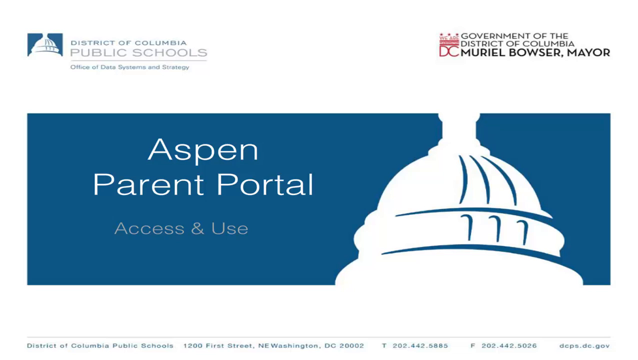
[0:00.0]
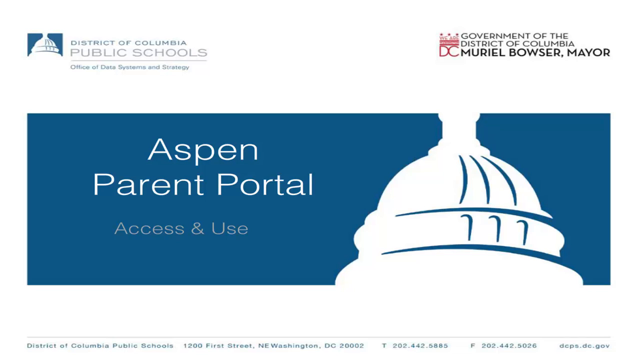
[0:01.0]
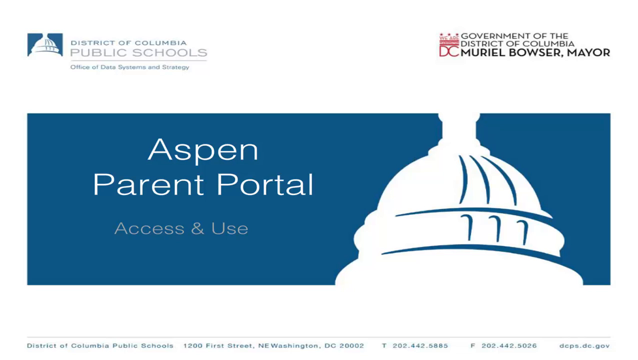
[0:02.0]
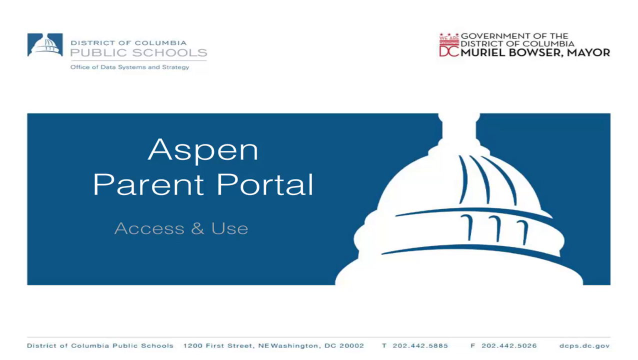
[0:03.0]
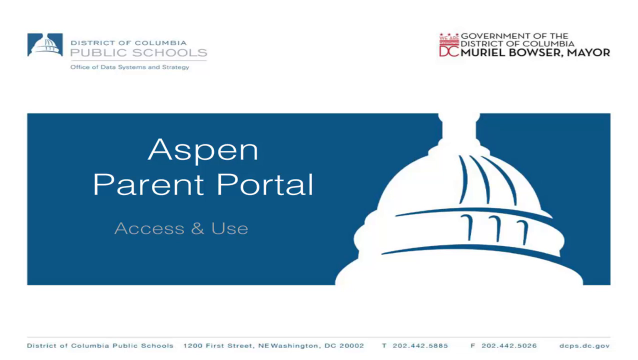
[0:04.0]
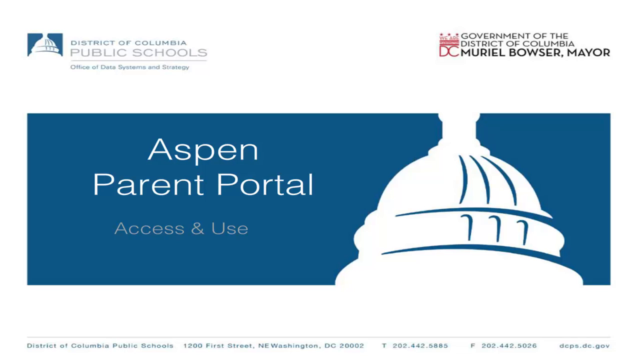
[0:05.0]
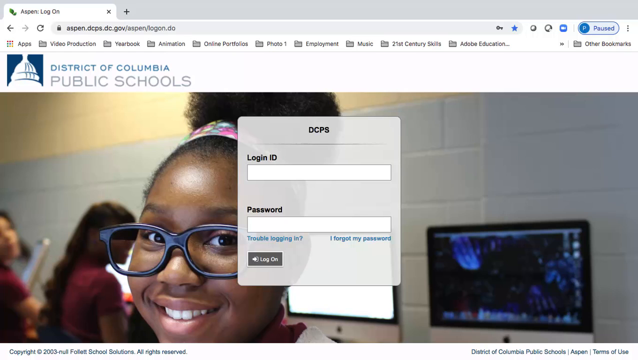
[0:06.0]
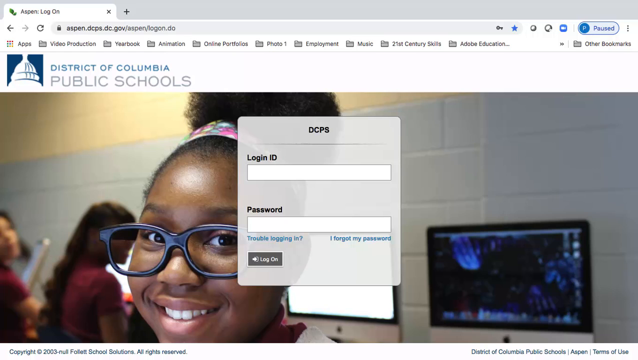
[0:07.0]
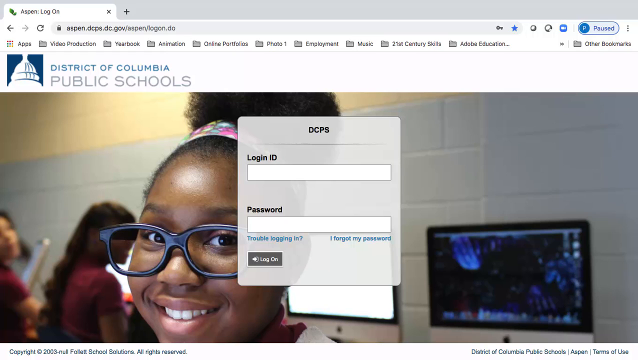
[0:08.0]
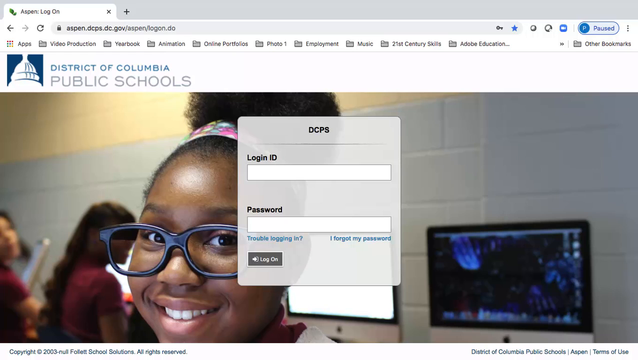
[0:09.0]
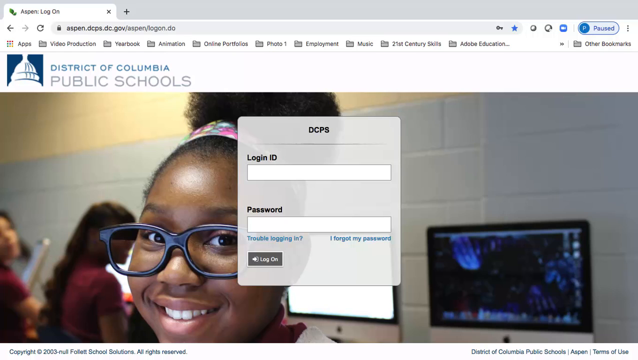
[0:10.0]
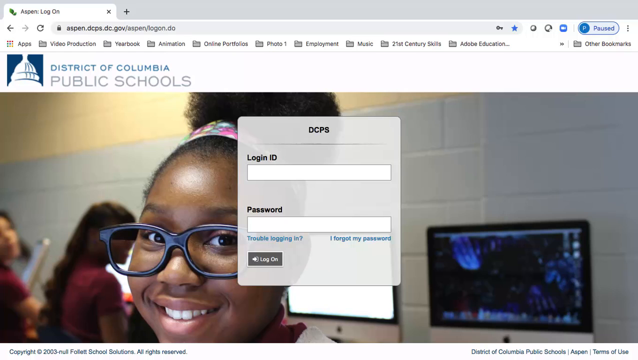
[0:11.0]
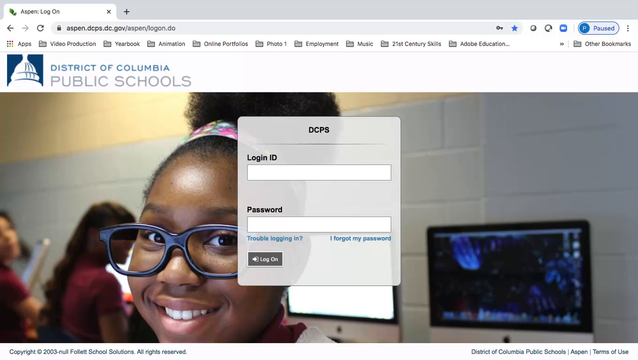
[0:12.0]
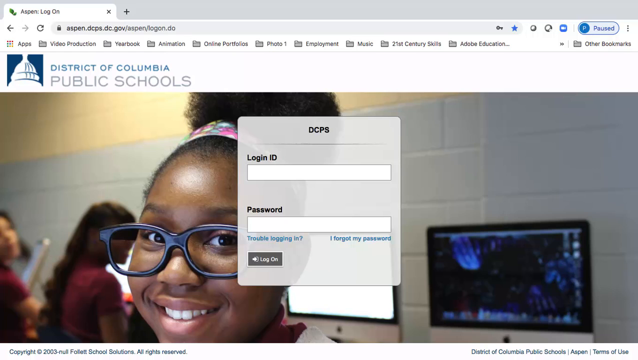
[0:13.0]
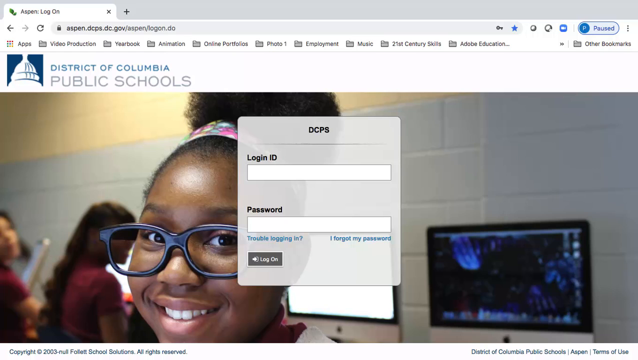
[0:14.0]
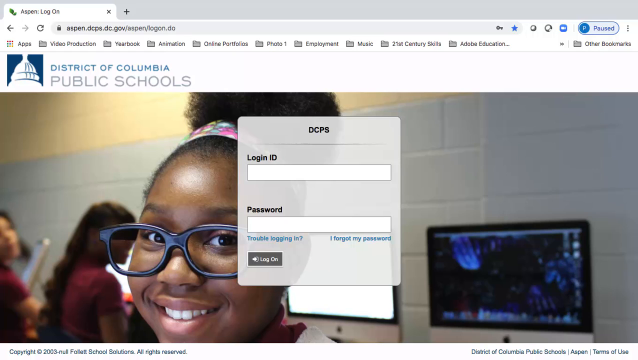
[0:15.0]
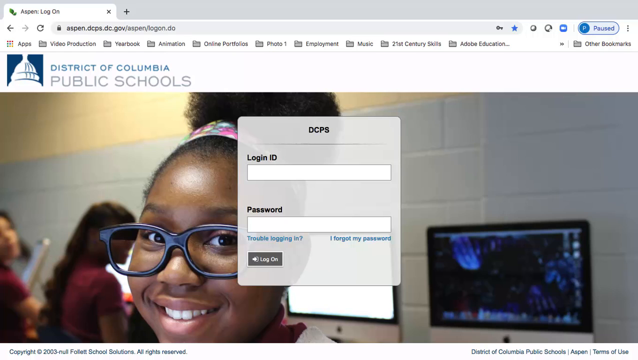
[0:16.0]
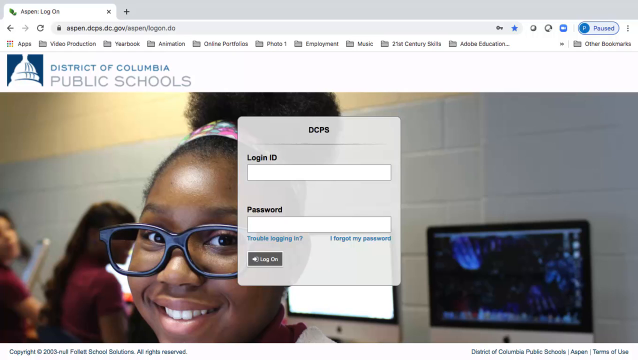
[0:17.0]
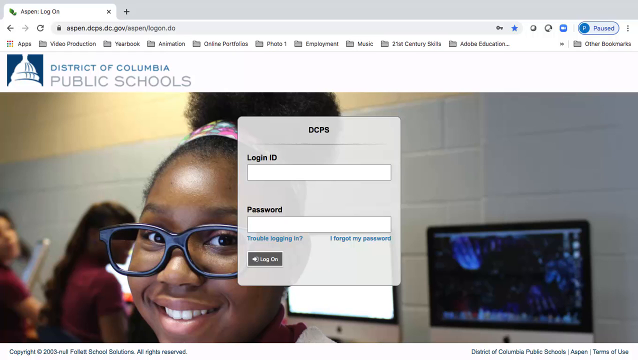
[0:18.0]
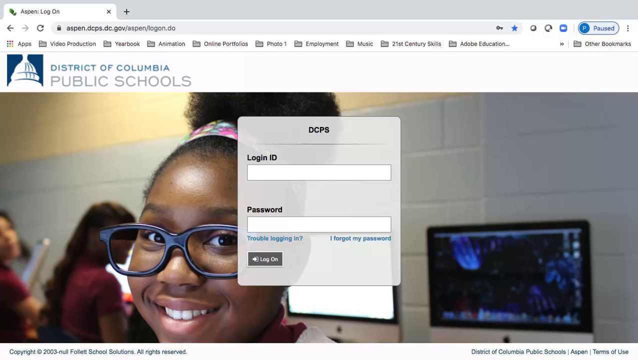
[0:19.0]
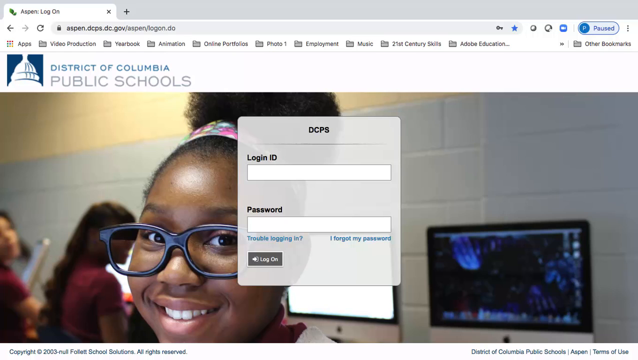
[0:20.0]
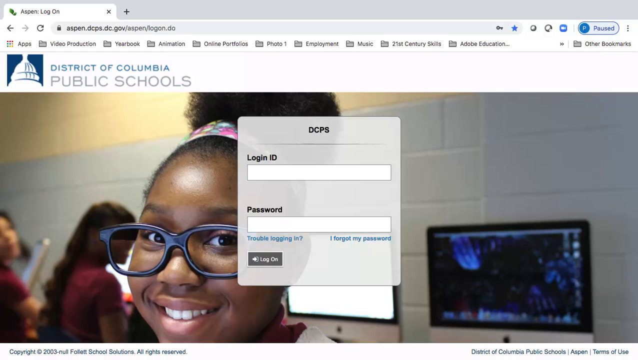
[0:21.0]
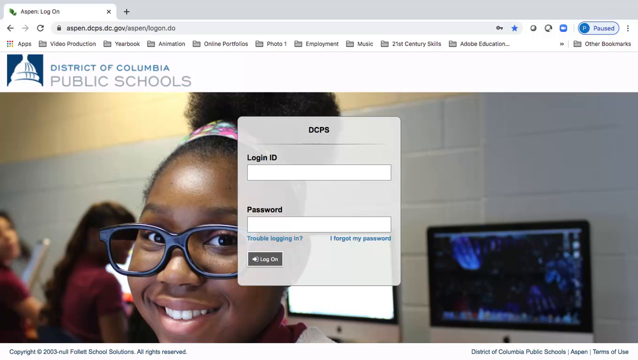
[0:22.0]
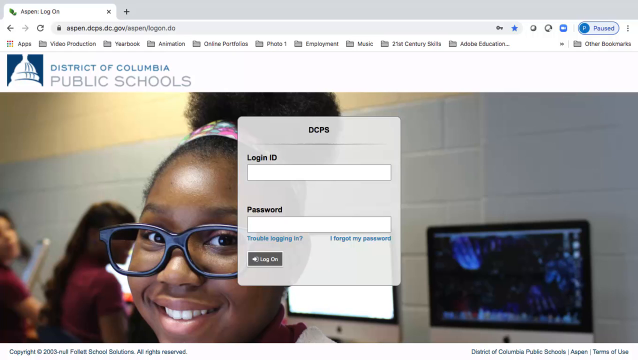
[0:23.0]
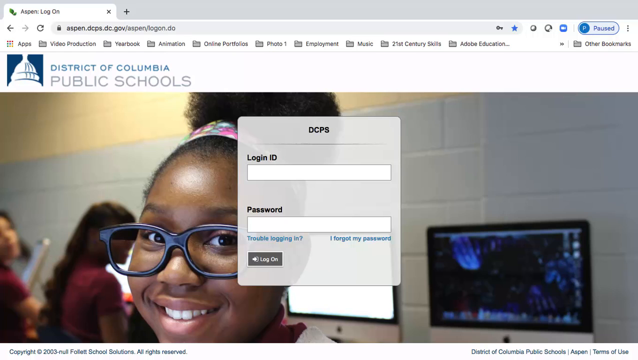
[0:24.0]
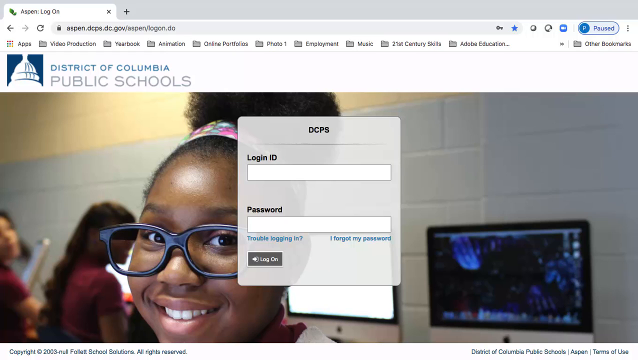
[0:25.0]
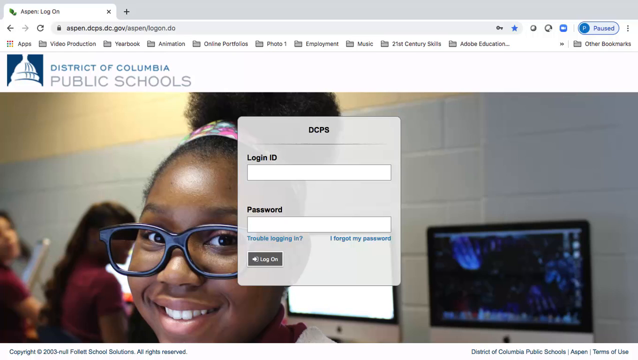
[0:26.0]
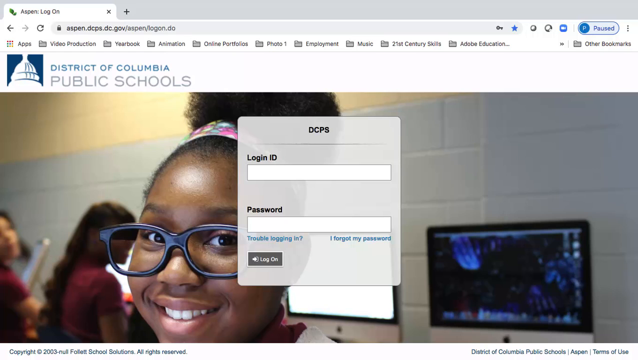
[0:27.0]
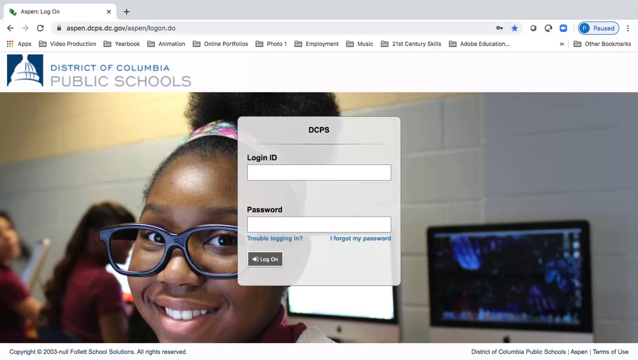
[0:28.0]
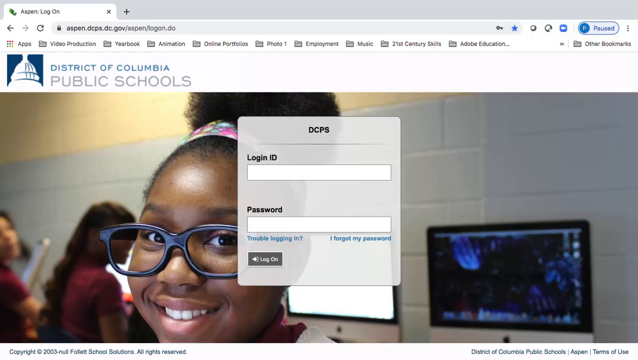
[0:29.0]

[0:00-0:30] The video opens on a page reading "Aspen Parent Portal Access and Use." In the top right corner it says "Government of the District of Columbia," and in the top left it says "District of Columbia Public Schools Office of Data Systems and Strategy." The page stays on screen for about five seconds, then changes to a login screen for the District of Columbia at Aspen.dcps.dc.gov. The login box is set over a background image of an African-American girl wearing black glasses with no lenses. Two people are behind her in the background, and a computer screen is to her right. The page remains for almost 10 seconds without changing, with no visible movement.